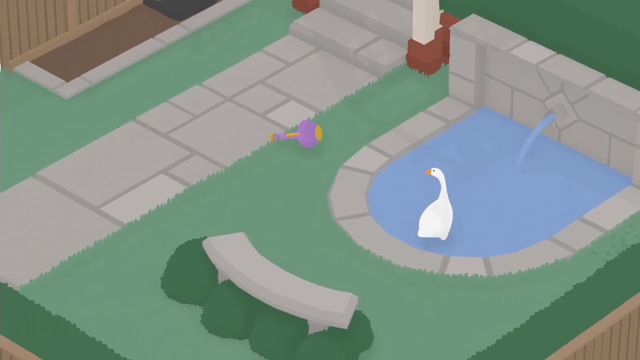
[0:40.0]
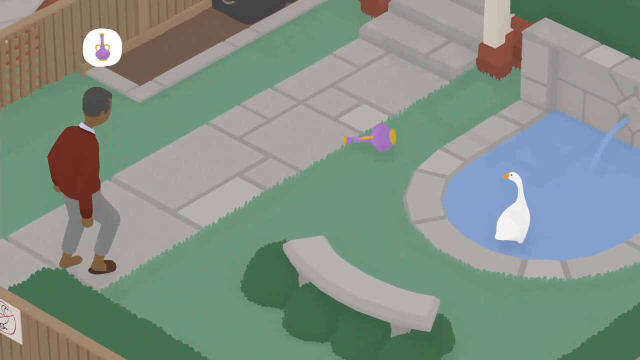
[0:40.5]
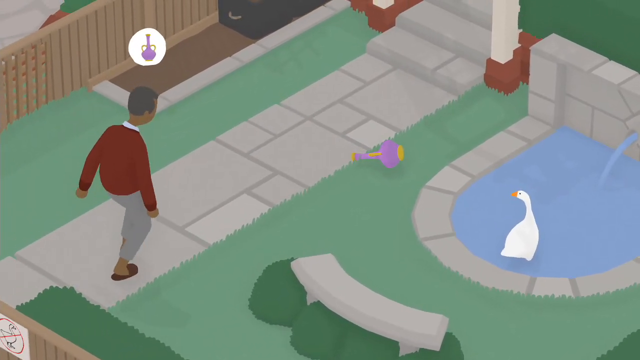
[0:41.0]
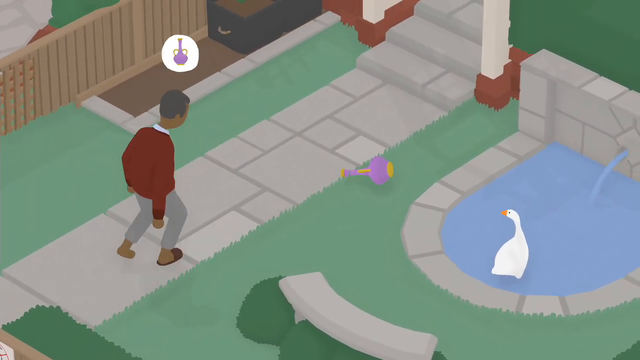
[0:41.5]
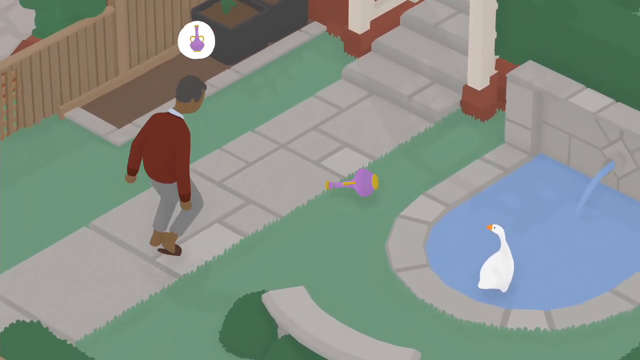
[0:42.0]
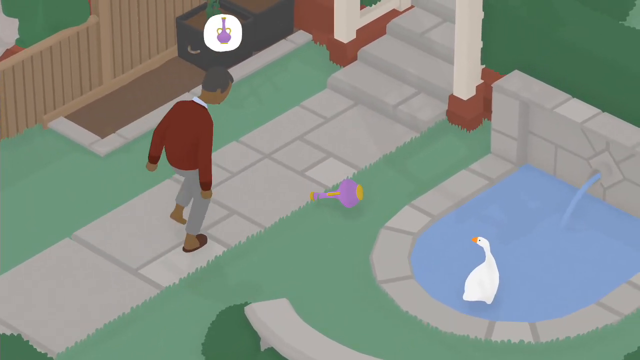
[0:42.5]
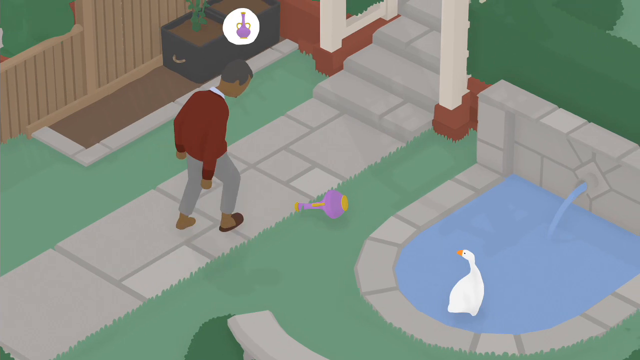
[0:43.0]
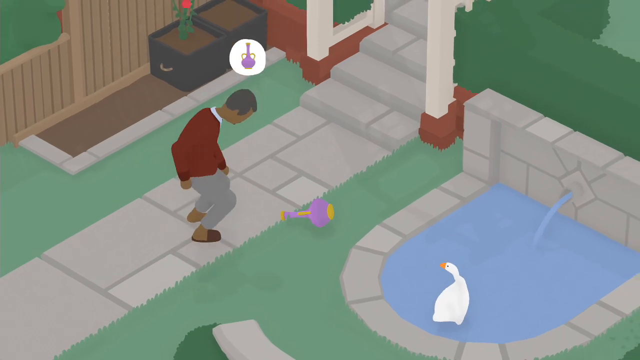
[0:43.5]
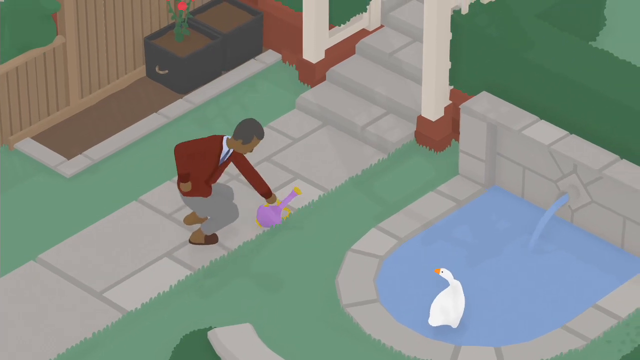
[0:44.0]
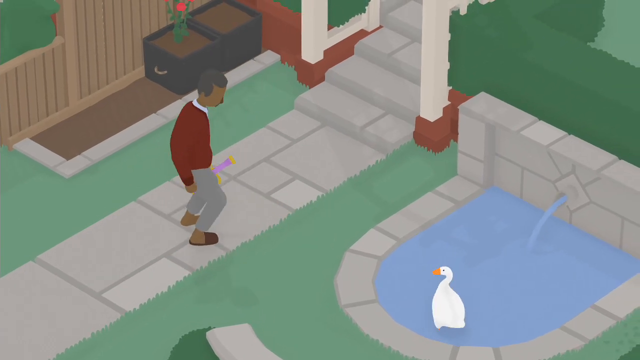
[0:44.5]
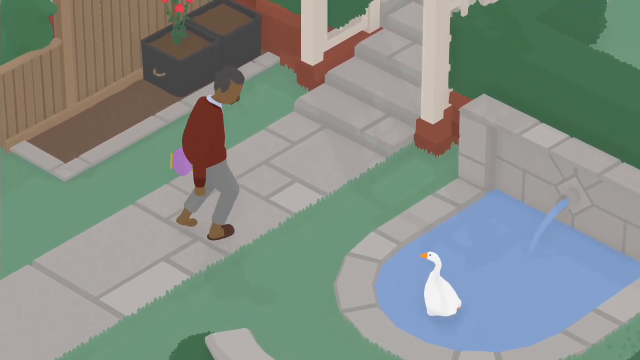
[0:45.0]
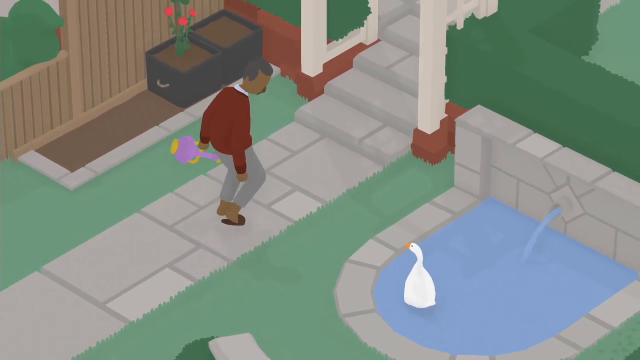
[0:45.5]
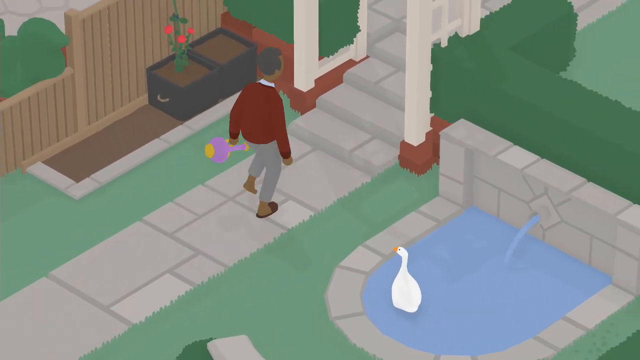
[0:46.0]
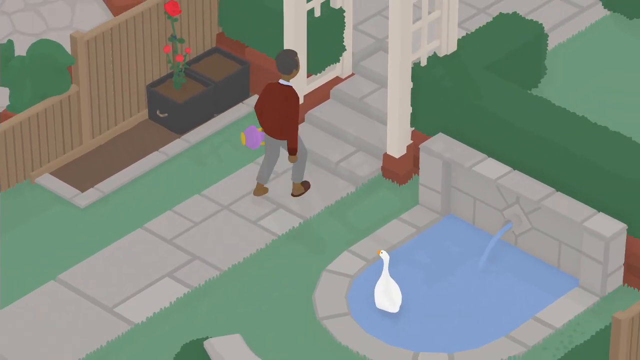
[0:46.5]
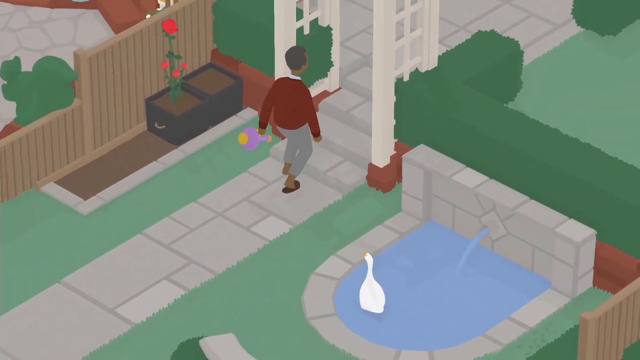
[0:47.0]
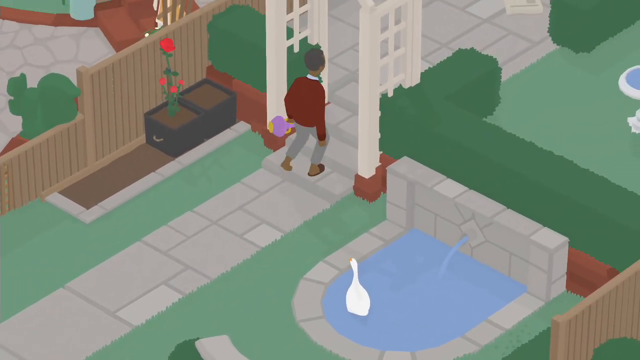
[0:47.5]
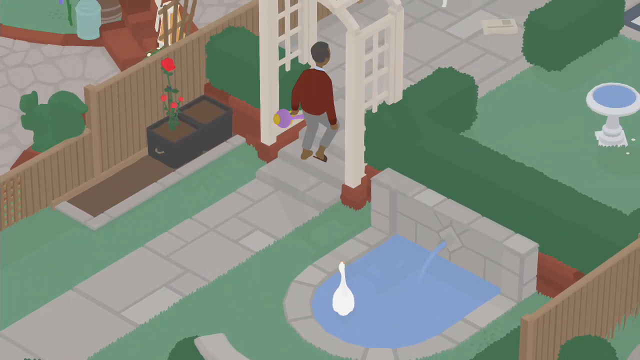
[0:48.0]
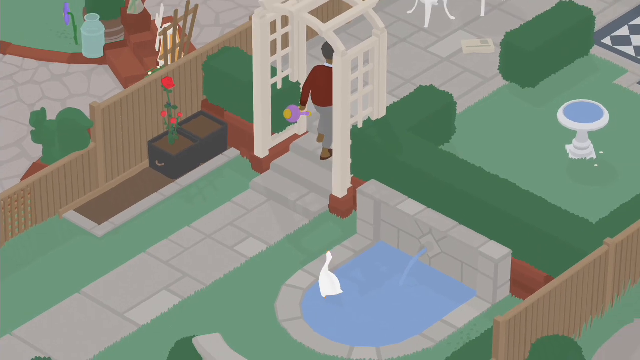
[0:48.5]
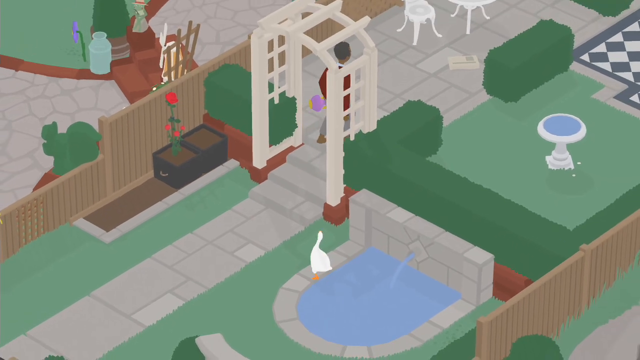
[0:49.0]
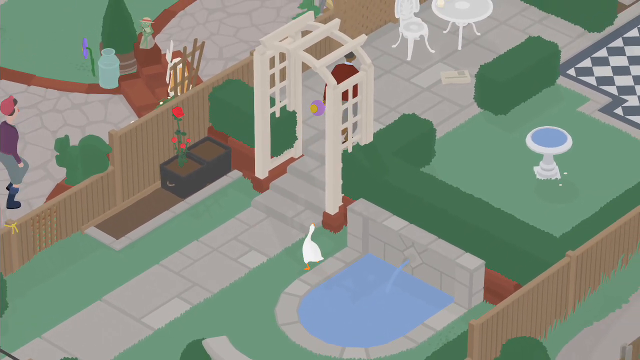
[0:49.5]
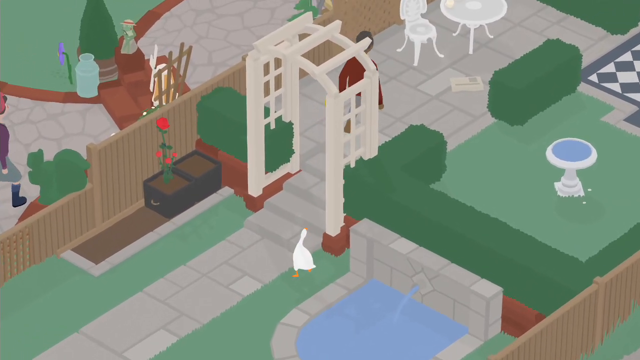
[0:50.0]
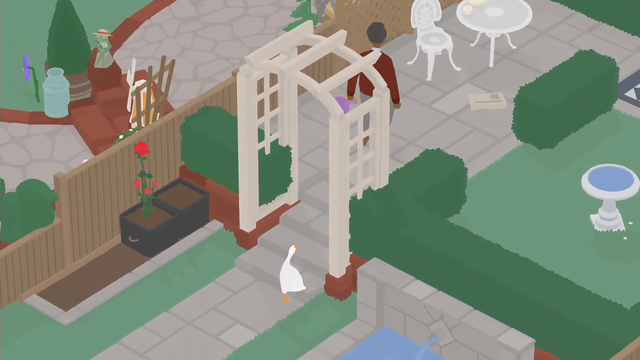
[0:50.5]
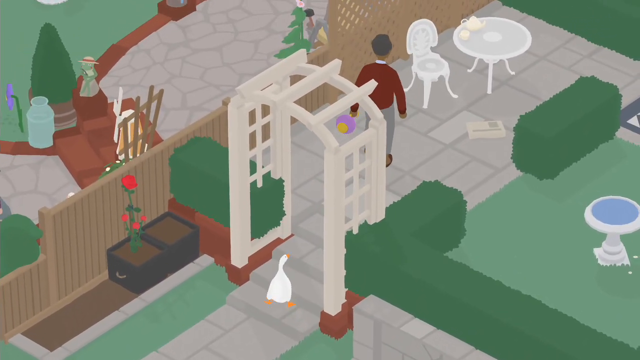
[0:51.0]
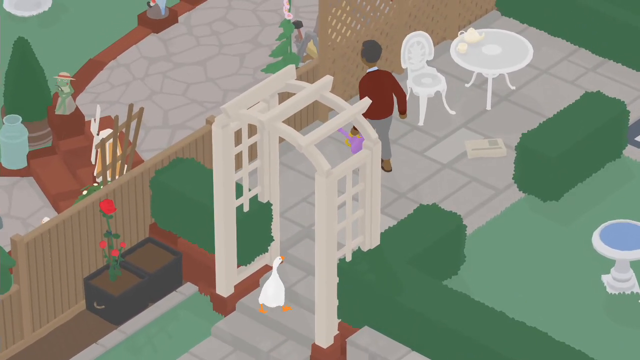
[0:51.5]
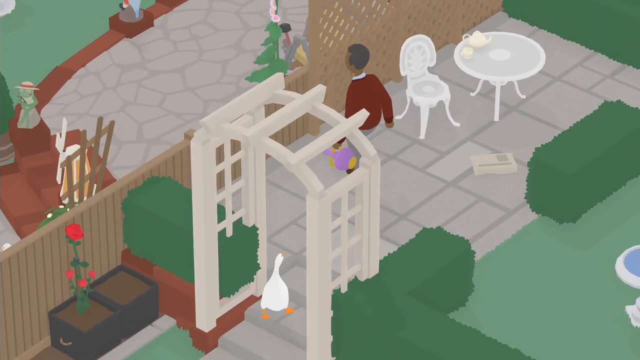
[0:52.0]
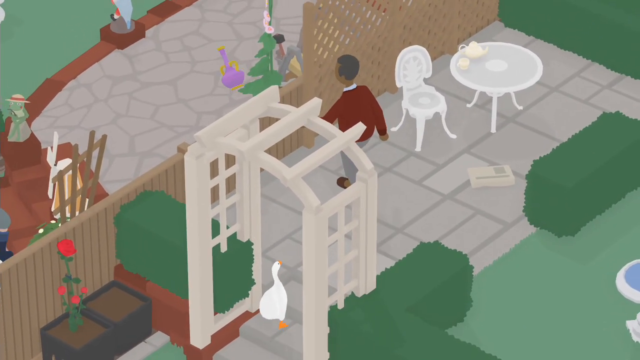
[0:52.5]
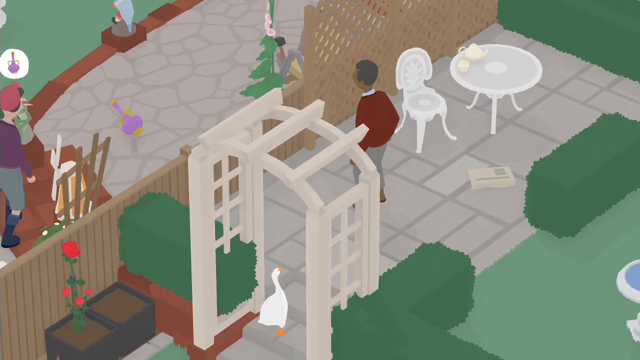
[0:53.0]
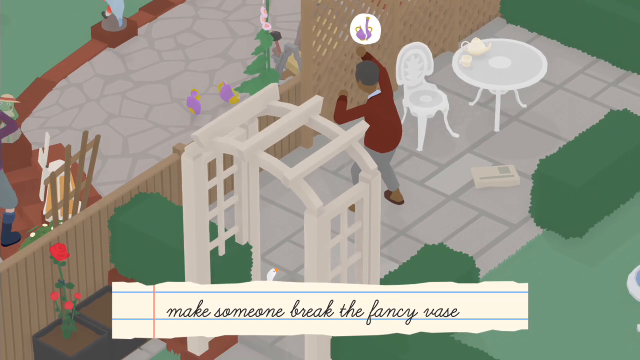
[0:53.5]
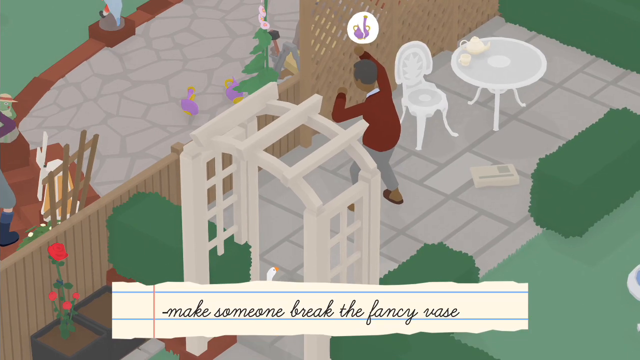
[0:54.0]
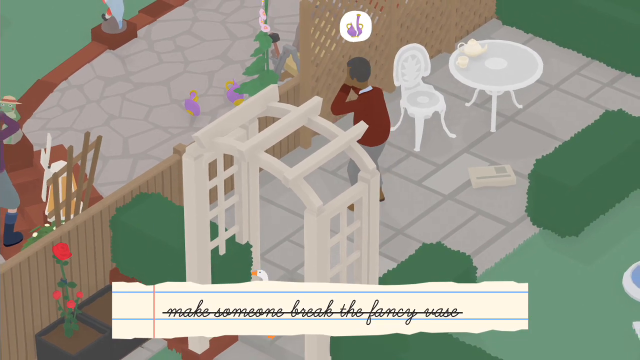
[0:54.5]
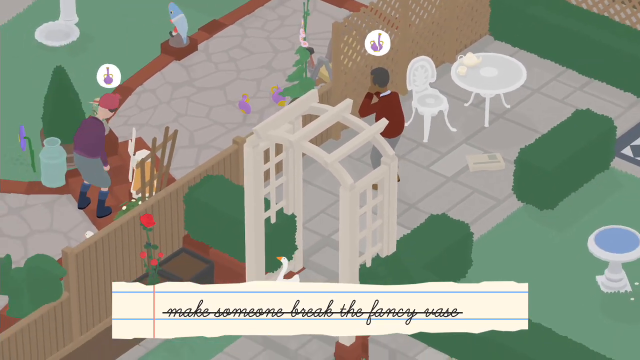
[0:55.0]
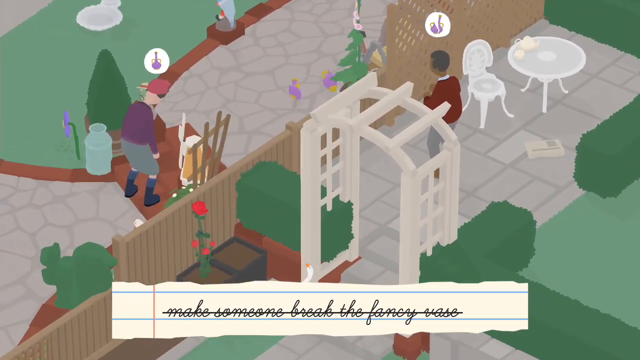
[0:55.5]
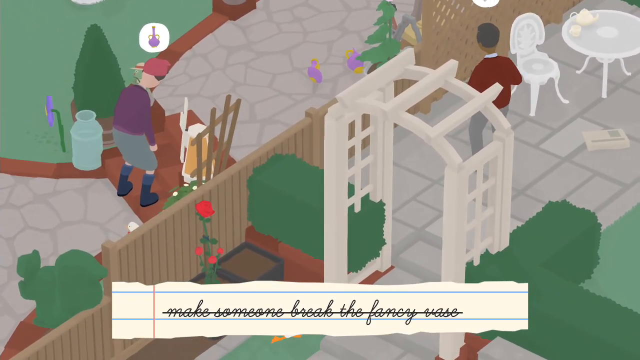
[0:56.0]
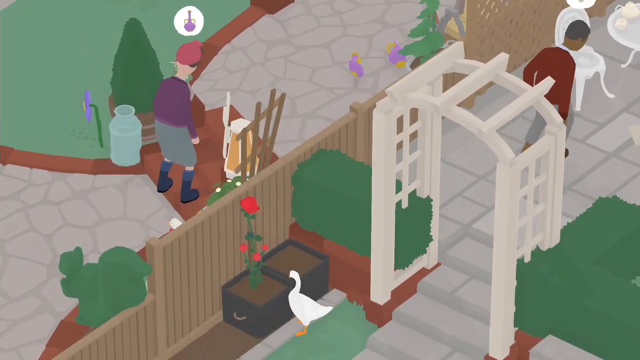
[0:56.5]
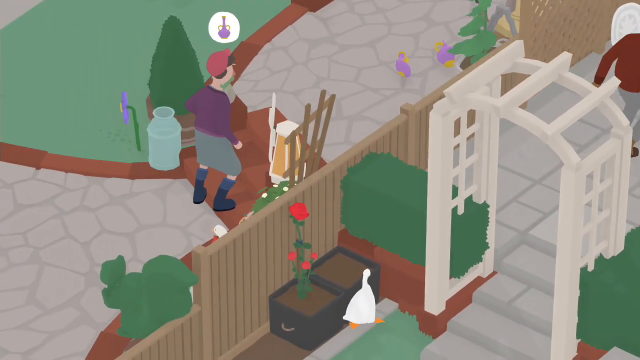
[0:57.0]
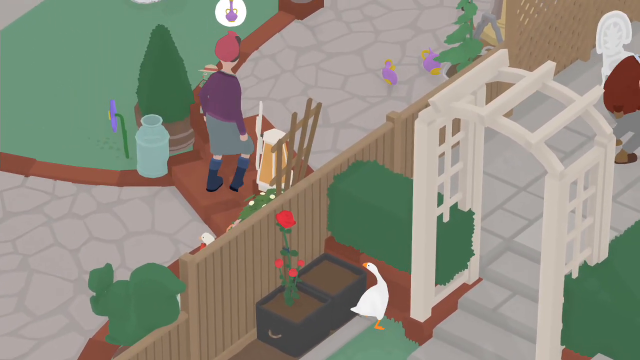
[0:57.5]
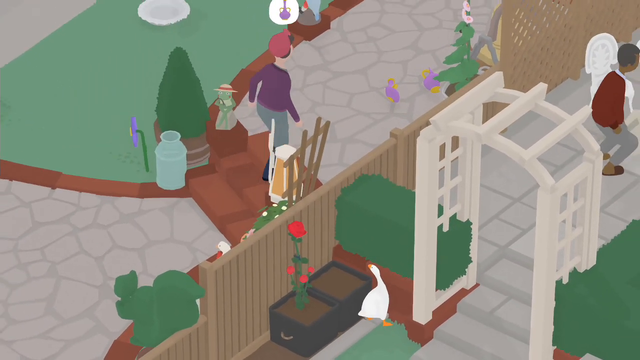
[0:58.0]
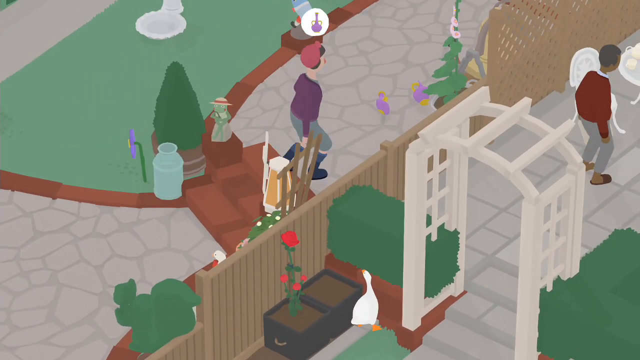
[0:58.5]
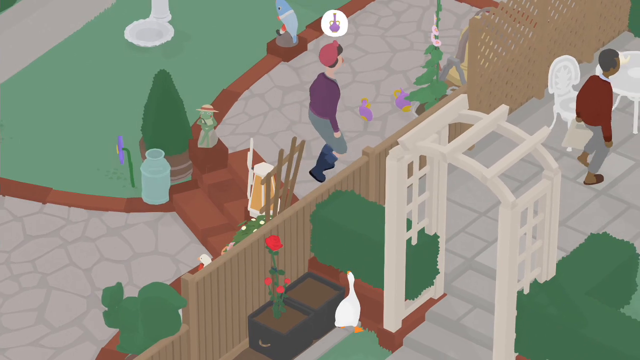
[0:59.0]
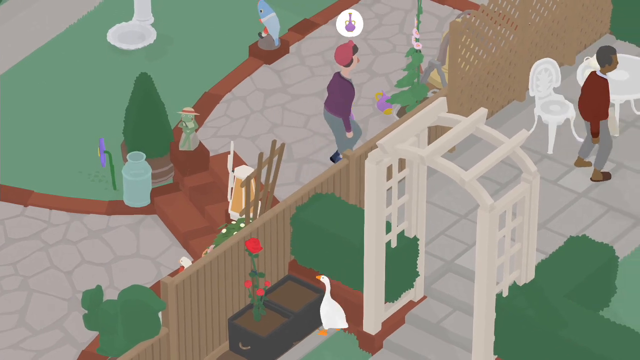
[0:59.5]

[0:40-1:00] The duck is in the water, seemingly looking at the man. A man in a red sweater looks at a potted purple vase, with an icon above his head showing that he is looking at it. While the duck watches him, he bends over, squatting down in his red flip-flops, and uses his left hand to pick up the purple vase. He brings it up while looking at the duck, then walks along the garden pathway into another part of the garden. The duck gets out of the fountain, waddles toward the overhang of the bushes and follows the man. It seems the man throws the vase across the fence line and it breaks. A to-do list pops up at the bottom of the screen that says "make sure the vase is broken". The goose then hides next to the rose petal flower and watches as humans move around the garden.